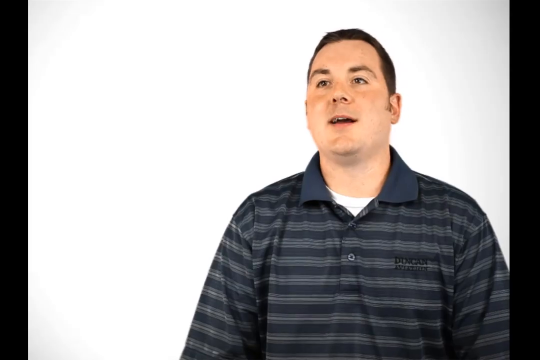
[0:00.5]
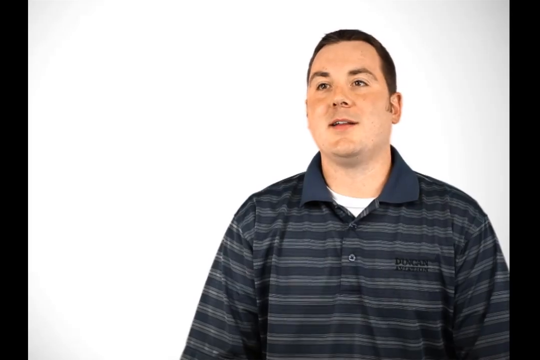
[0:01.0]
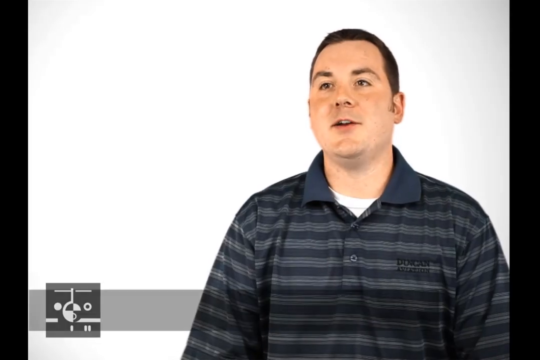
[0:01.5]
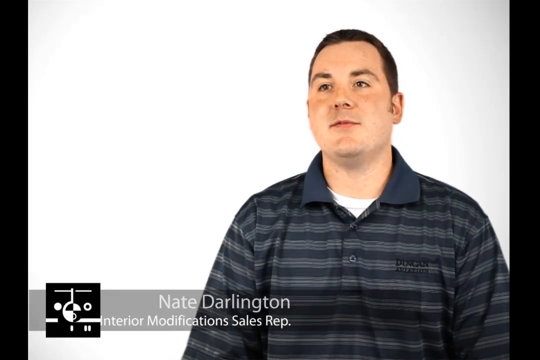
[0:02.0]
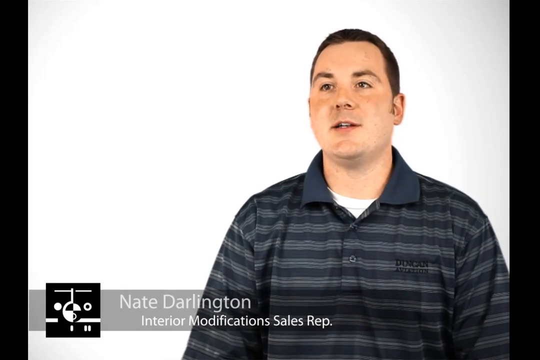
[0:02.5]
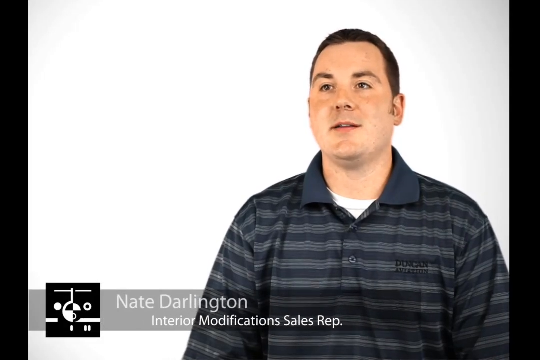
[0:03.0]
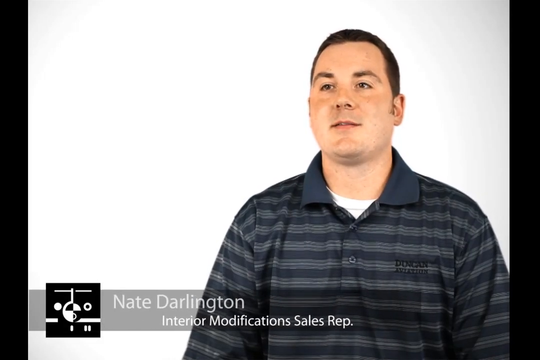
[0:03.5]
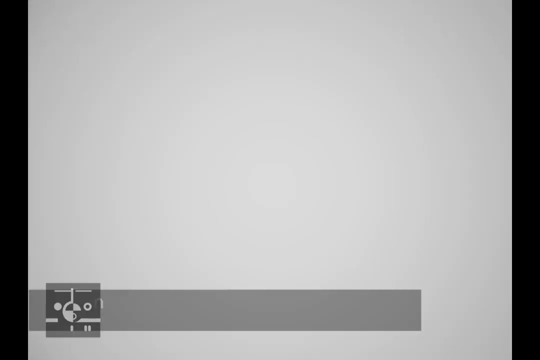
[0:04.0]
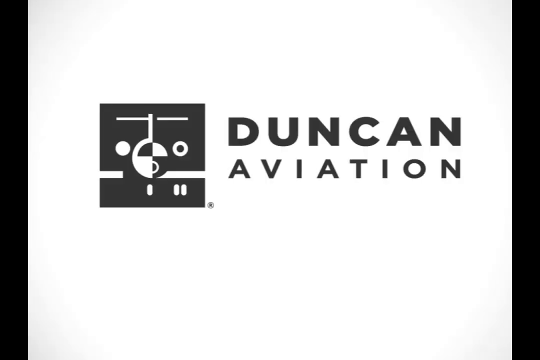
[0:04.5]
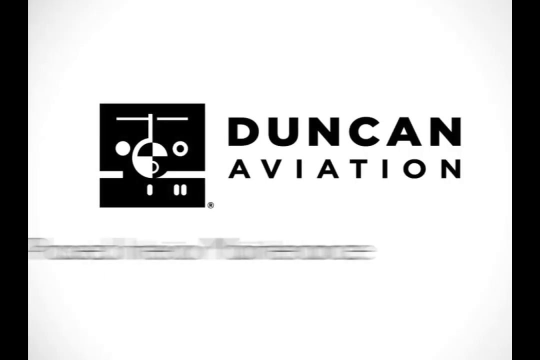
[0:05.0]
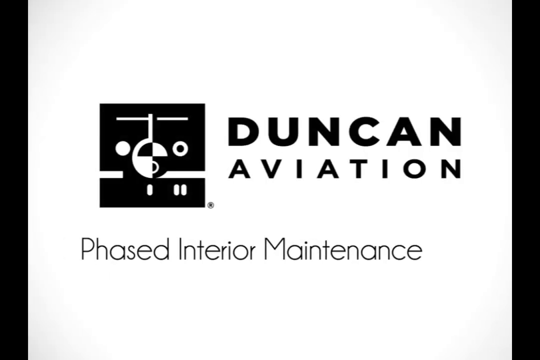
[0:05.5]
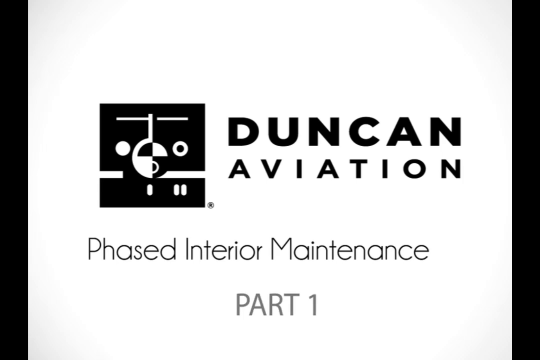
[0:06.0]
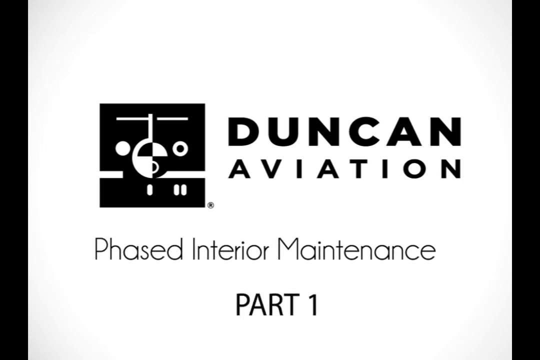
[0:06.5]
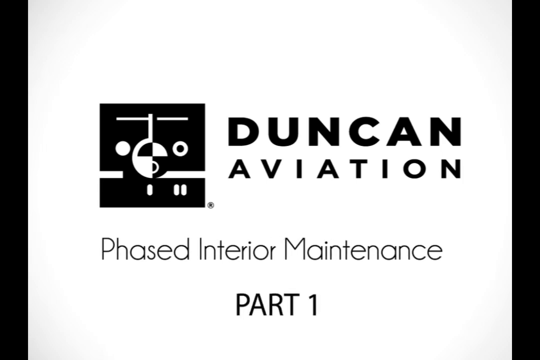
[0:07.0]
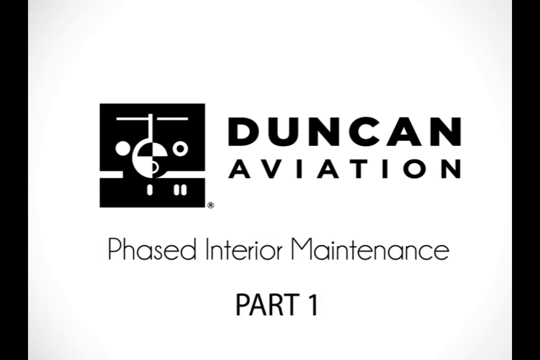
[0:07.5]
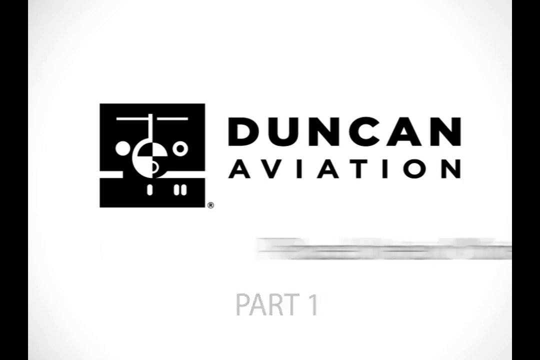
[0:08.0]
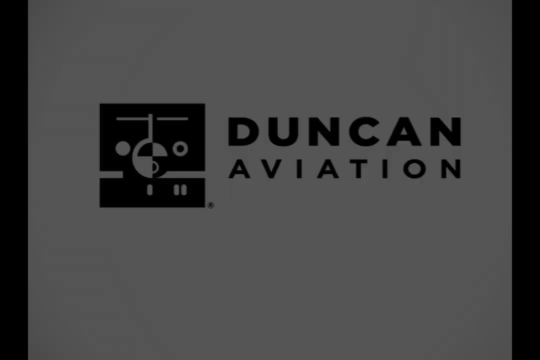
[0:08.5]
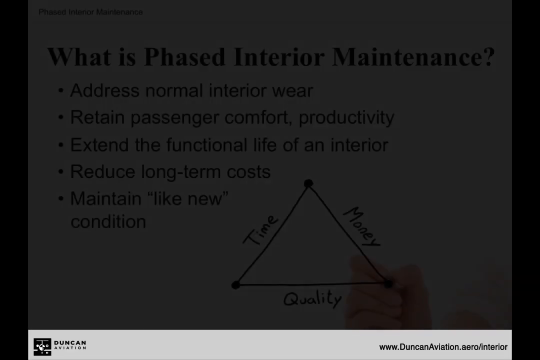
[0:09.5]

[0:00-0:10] A man named Nate Darlington is on the right side of the video, talking. Text on screen reads "Interior Modification Sales Division," "Duncan Aviation" and "phase one." A page pops up for just a second, titled "what is phased interior maintenance," with the lines "address normal interior wear" and "retain passenger comfort productivity," followed by bullet points reading "extend the functional life of an interior," "reduce long-term cost" and, last, "maintain 'like new' condition." A triangle has been drawn: along the left side it says "time," going down the right side it says "money," and across the bottom horizontally it says "quality."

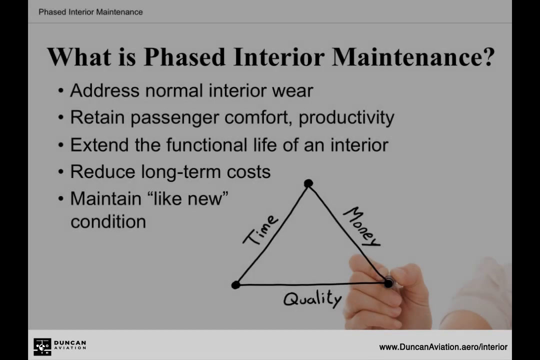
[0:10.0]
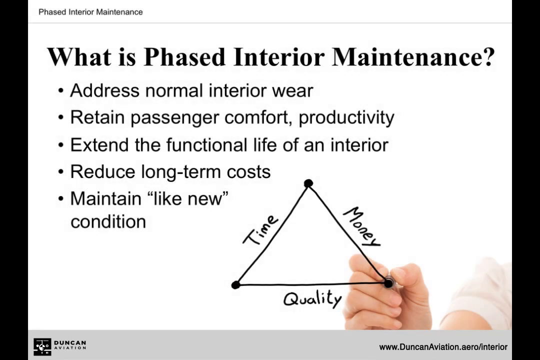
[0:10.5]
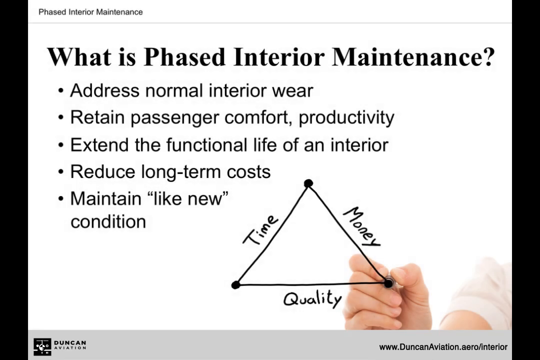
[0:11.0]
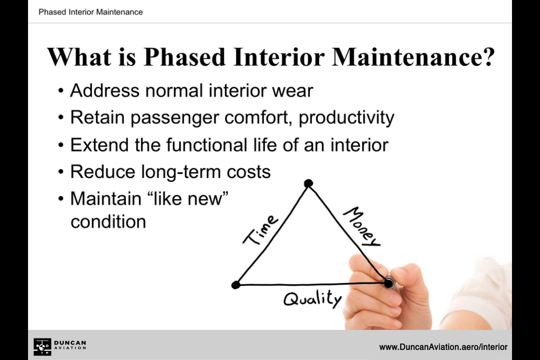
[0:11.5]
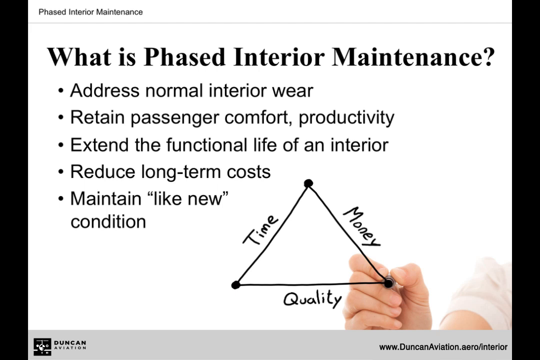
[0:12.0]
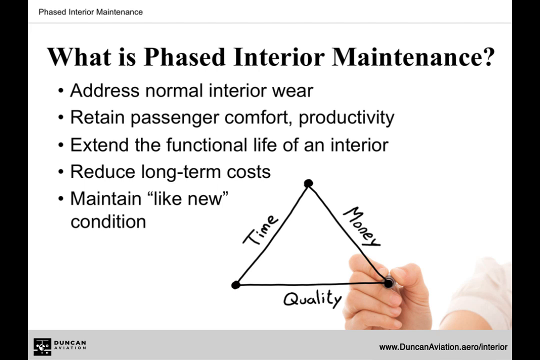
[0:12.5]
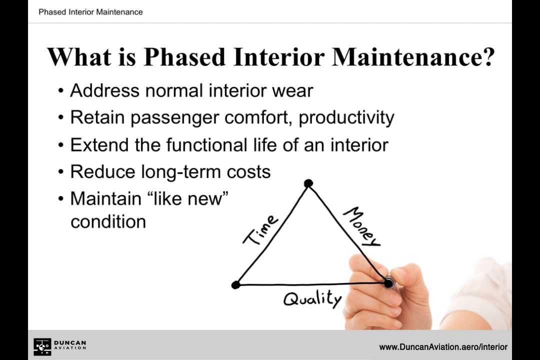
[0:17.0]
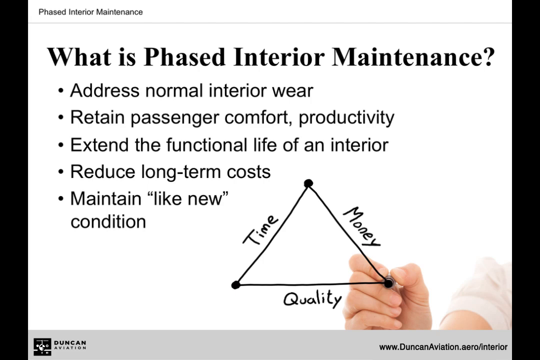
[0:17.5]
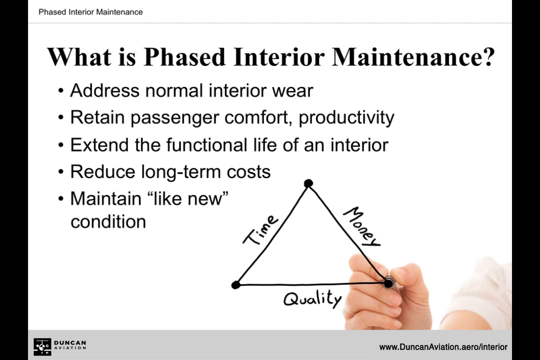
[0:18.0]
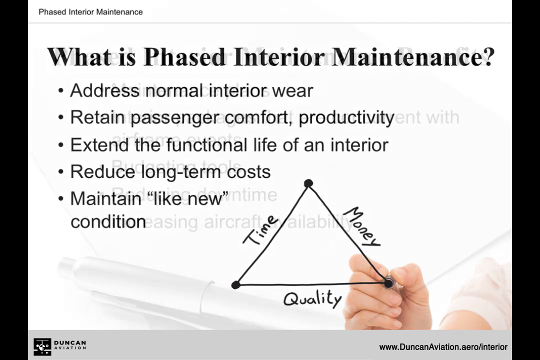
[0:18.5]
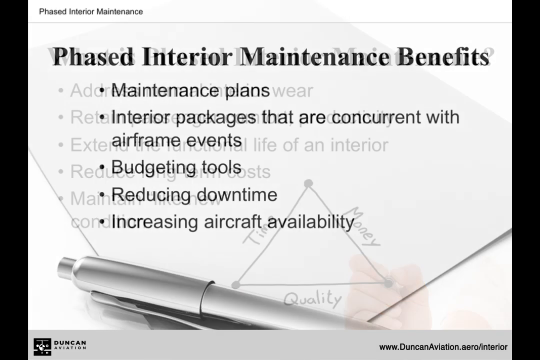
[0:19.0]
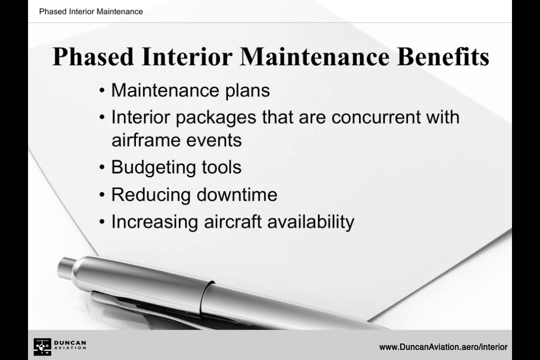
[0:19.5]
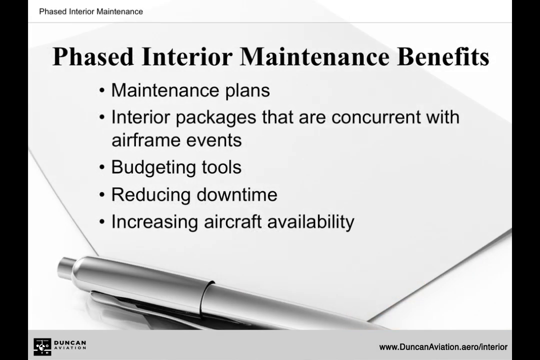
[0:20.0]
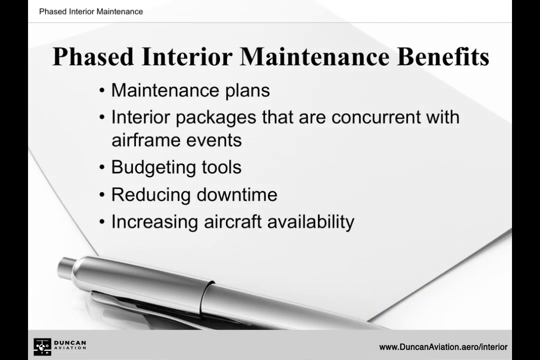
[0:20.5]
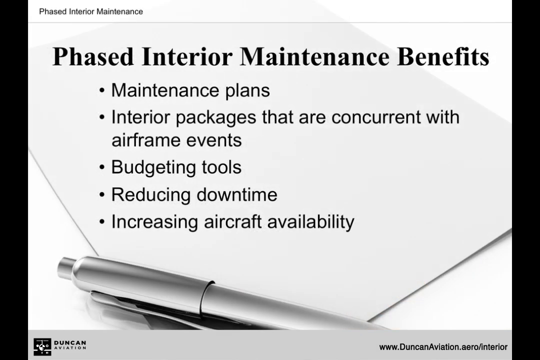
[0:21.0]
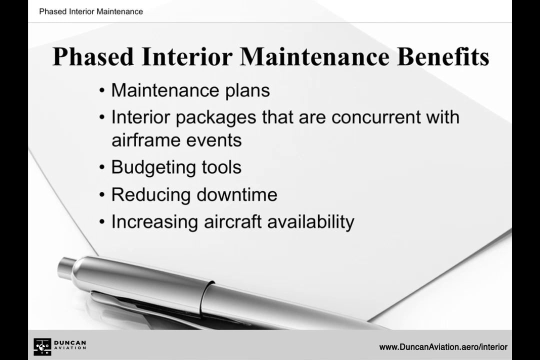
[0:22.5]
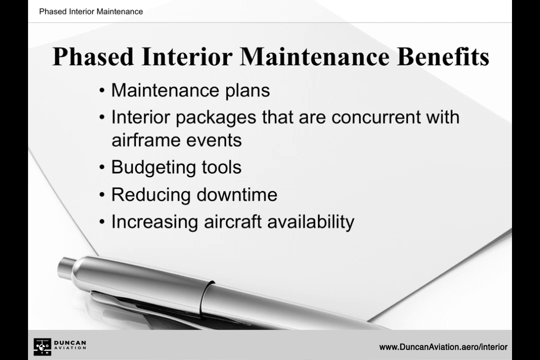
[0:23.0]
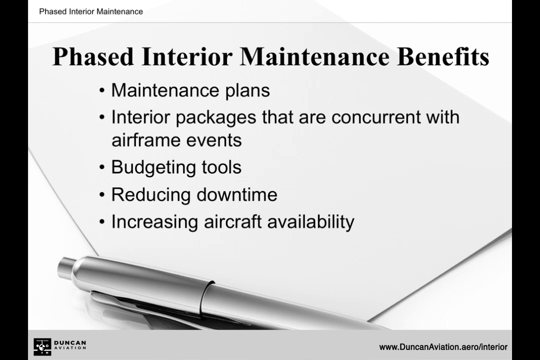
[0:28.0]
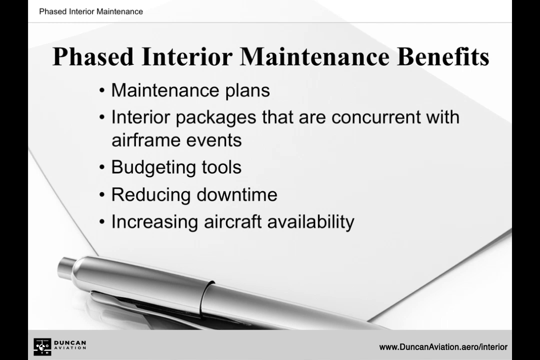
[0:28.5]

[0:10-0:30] A list appears under the title "what is phased interior maintenance?" with five bullet points: "address normal interior wear," "retain passenger comfort productivity," "extend the functional life of an interior," "reduce long-term costs" and "maintain like new condition." A person's hand draws on the screen, kind of backwards, as if the hand is drawing outward. The triangle has three dots connected with a line; going up the left side it says "time," going down the right side it says "money," and horizontally across the middle it says "quality." This stays on screen for a little while, and then a new picture appears reading "phased interior maintenance benefits" with five bullet points: "maintenance plans," "interior packages that are concurrent with airframe events," "budgeting tools," "reducing downtime" and "increasing aircraft availability." A silver ballpoint pen is lying at the bottom.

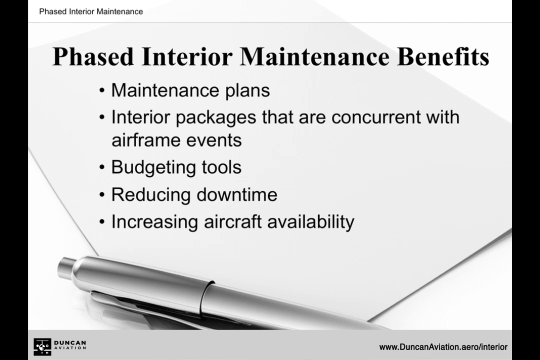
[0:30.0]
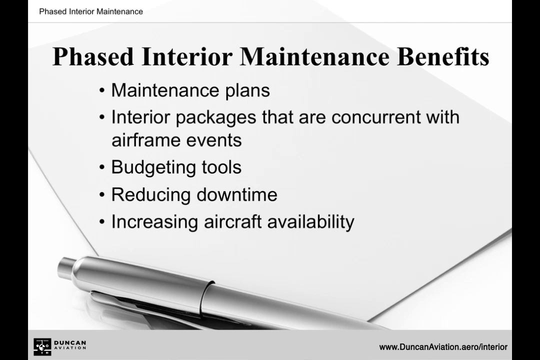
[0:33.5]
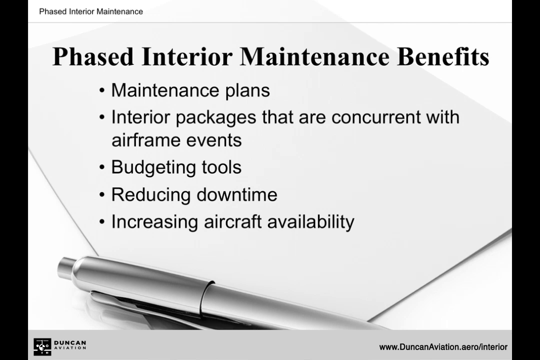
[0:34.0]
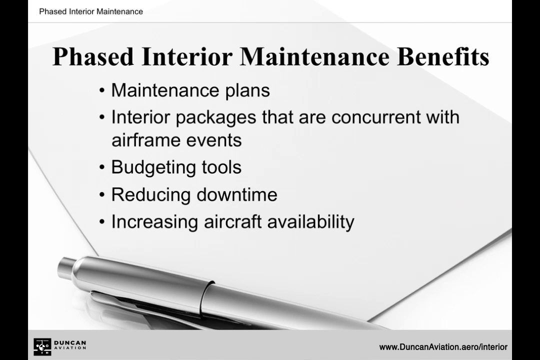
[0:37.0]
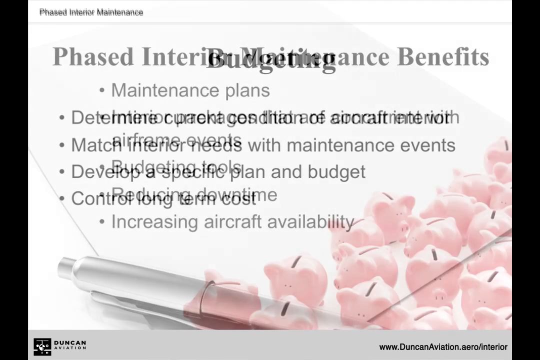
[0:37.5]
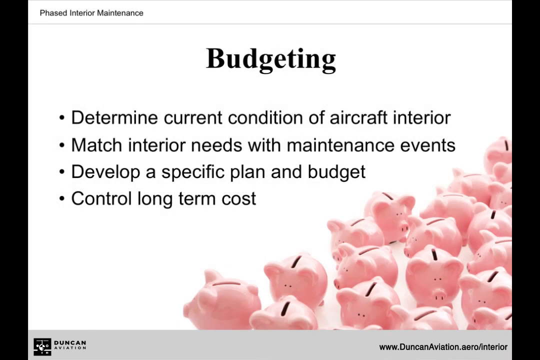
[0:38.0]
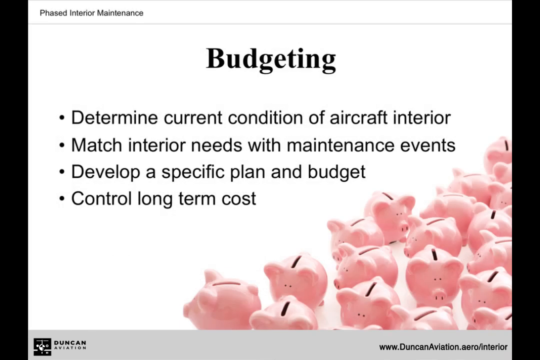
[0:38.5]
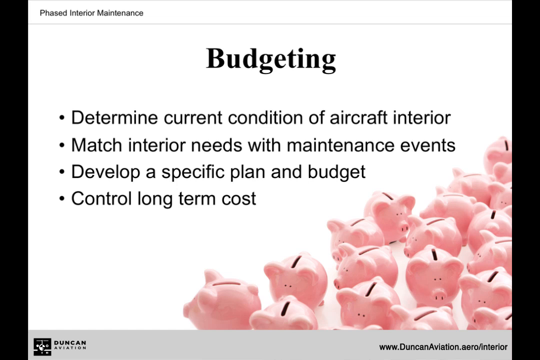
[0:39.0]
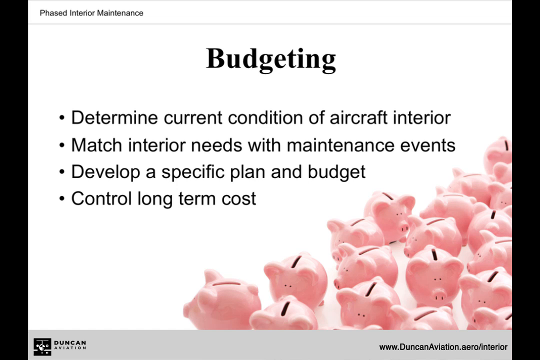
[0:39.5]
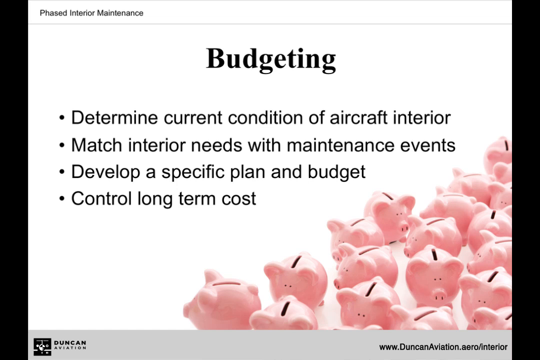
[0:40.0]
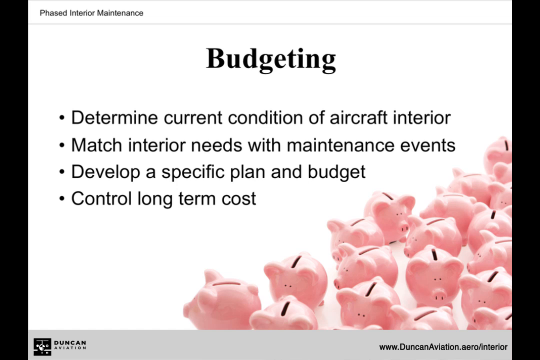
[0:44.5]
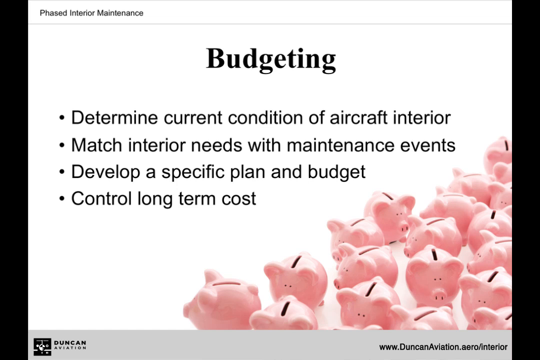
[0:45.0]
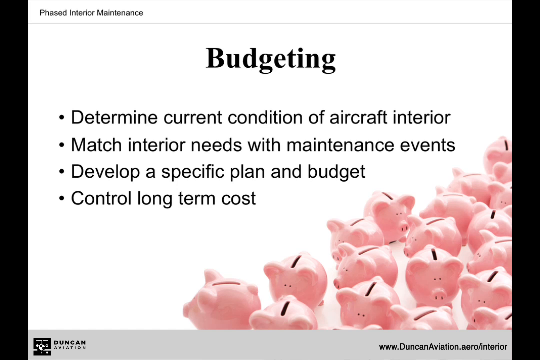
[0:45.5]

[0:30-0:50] A page shows "phased interior maintenance" in very tiny print in the top left corner and, in the middle area, "phased interior maintenance benefits" with five bullet points: "maintenance plans," "interior packages that are concurrent with airframe events," "budgeting tools," "reducing downtime" and "increasing aircraft availability." A silver ballpoint pen is at the bottom. Another page then comes up that says "budgeting," with four bullet points: "determine current condition of aircraft interior," "match interior needs with maintenance events," "develop a specific plan and budget" and "control long-term cost." In the lower right-hand corner there are a whole bunch of pink pigs, little tiny banks with a slot on top to put money in.